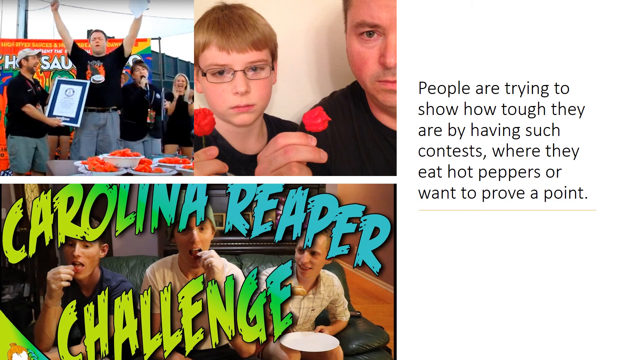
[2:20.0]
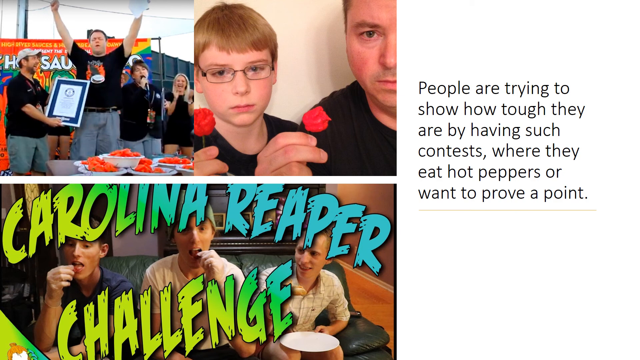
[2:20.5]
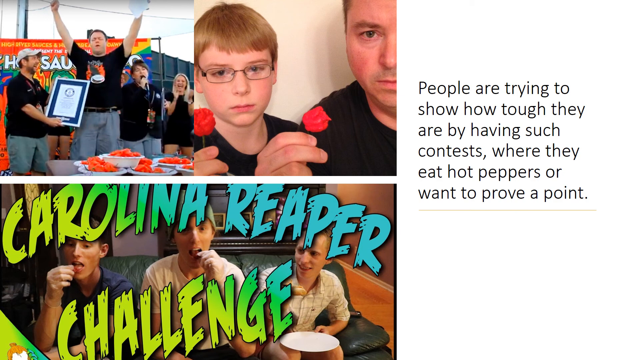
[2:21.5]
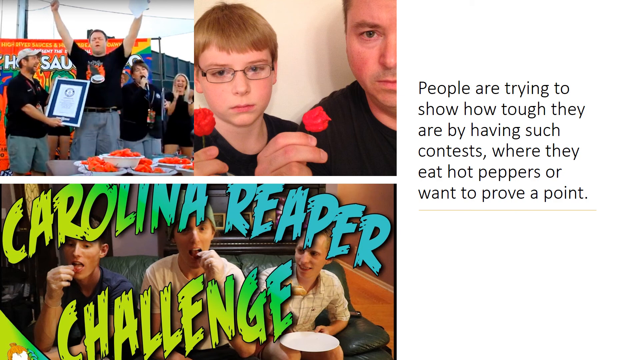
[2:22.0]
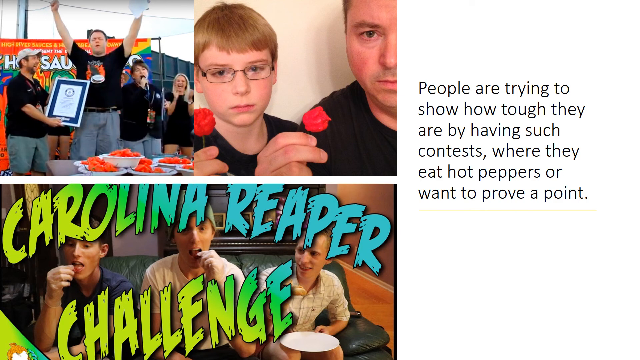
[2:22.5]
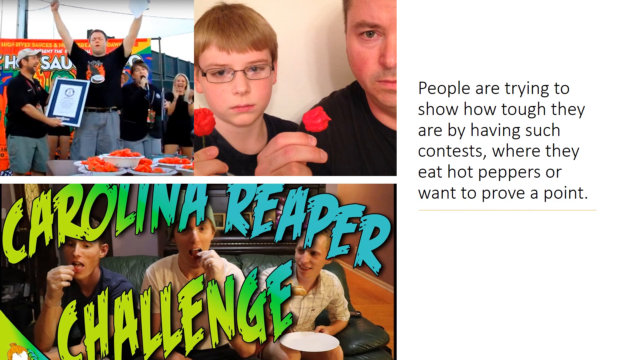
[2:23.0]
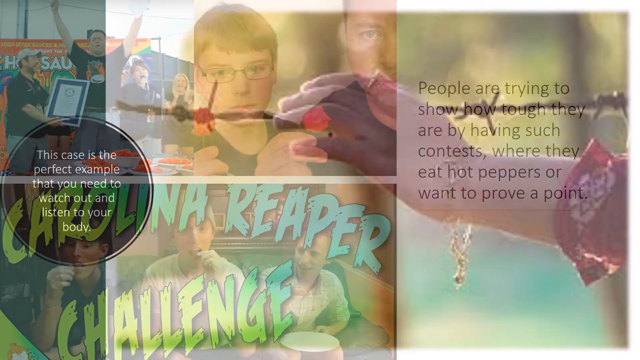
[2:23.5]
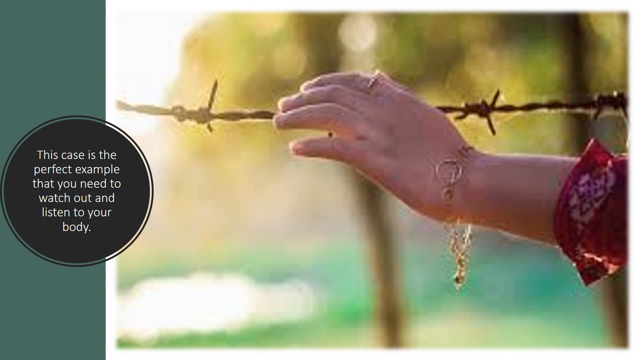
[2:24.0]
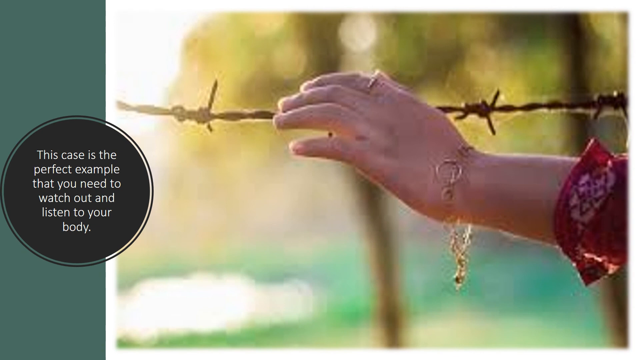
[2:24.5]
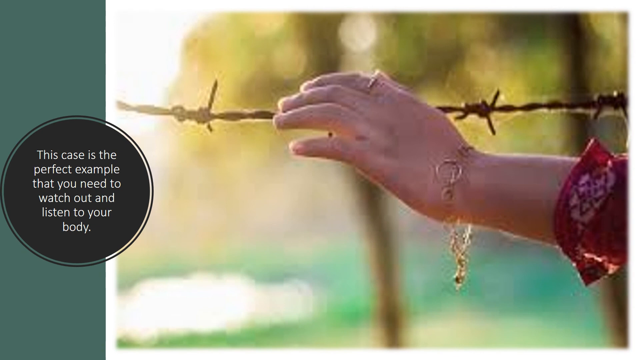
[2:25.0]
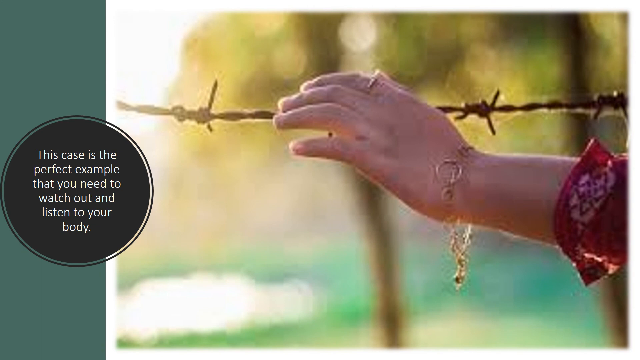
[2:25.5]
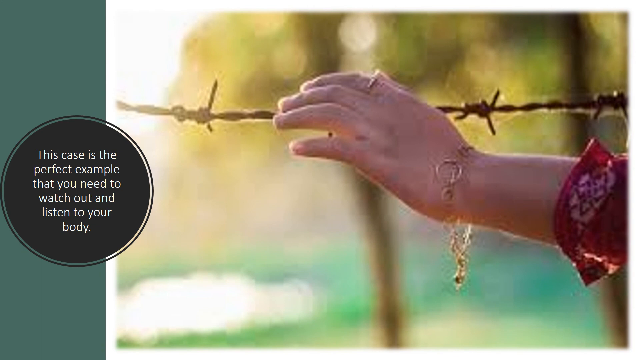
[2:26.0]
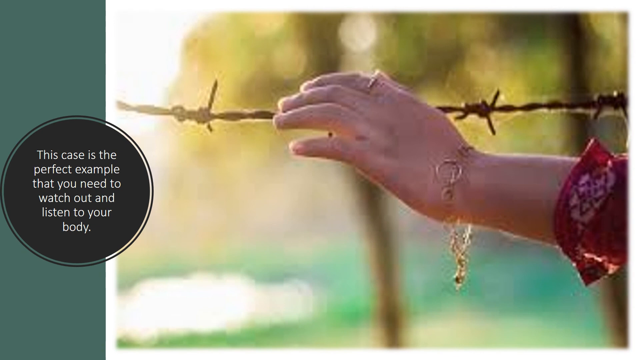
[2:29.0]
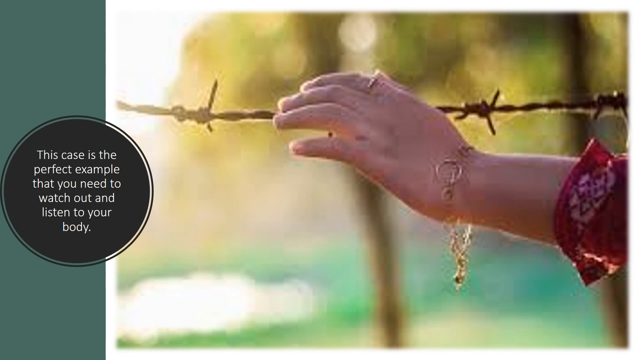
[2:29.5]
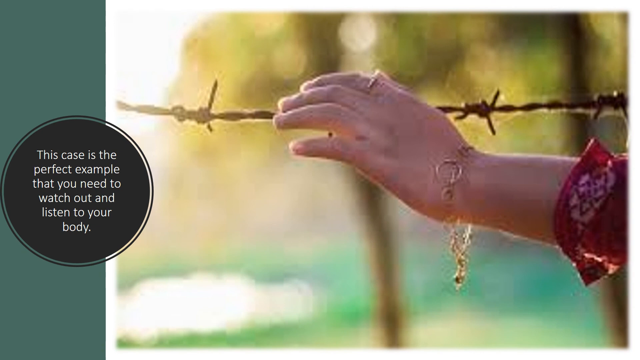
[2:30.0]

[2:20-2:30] What appear to be various images of people taking a Carolina Reaper challenge are shown. The video switches to a slide reading "this case is the perfect example that you need to watch out and listen to your body." A woman's hand wearing a gold bracelet and a ring appears to be touching a barbed wire fence.